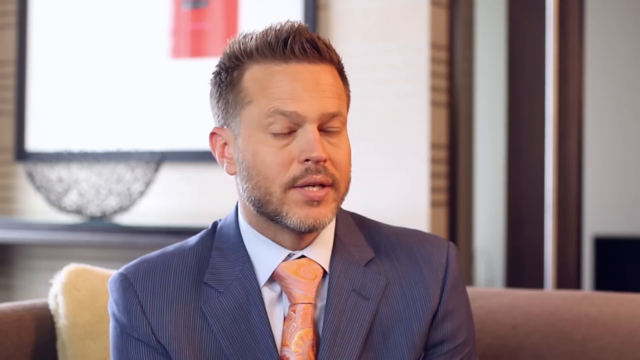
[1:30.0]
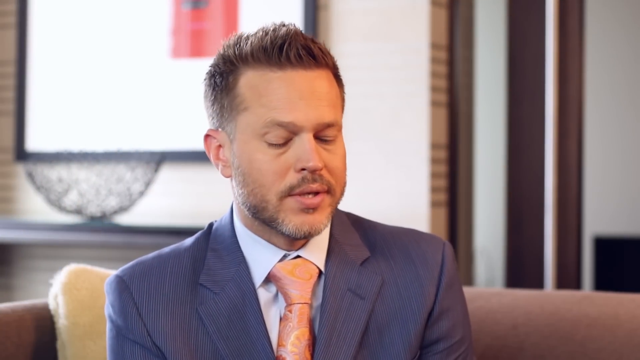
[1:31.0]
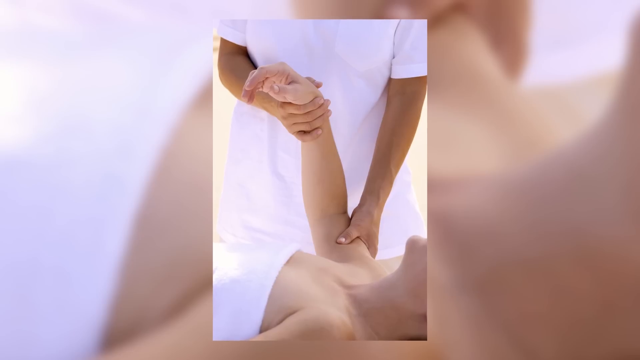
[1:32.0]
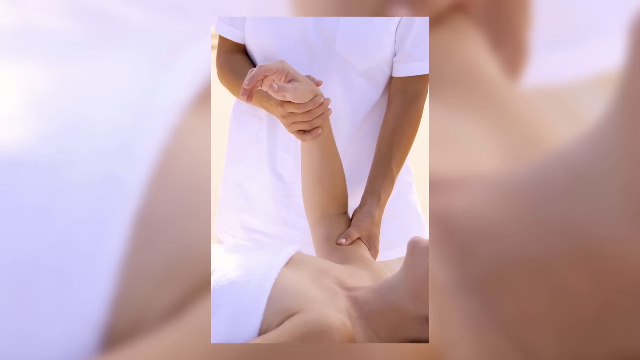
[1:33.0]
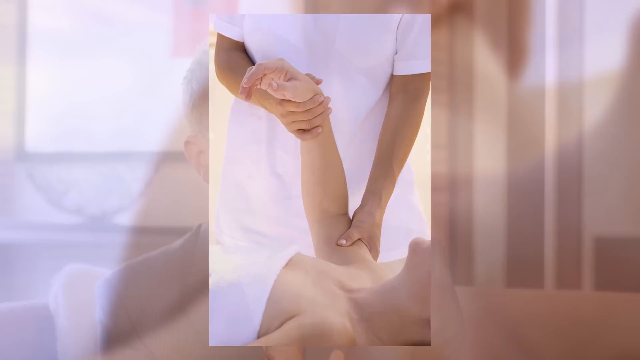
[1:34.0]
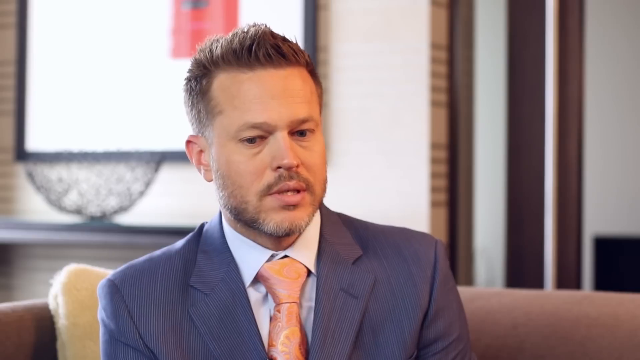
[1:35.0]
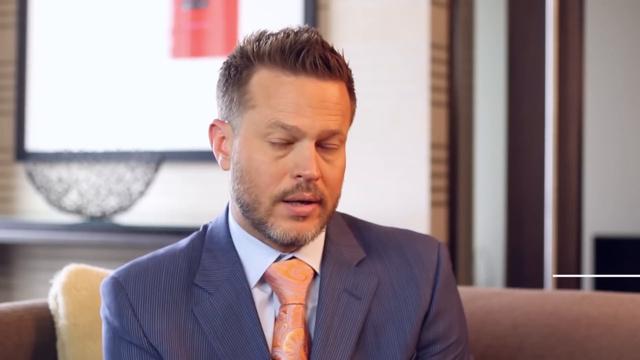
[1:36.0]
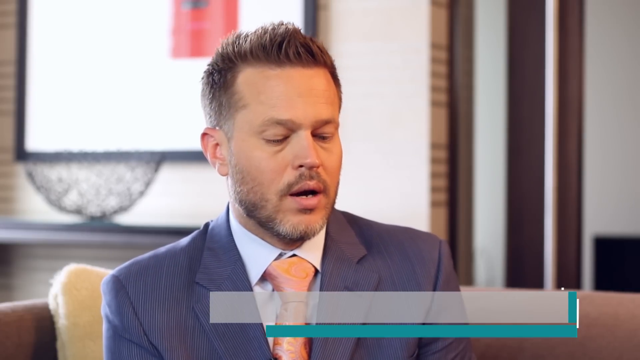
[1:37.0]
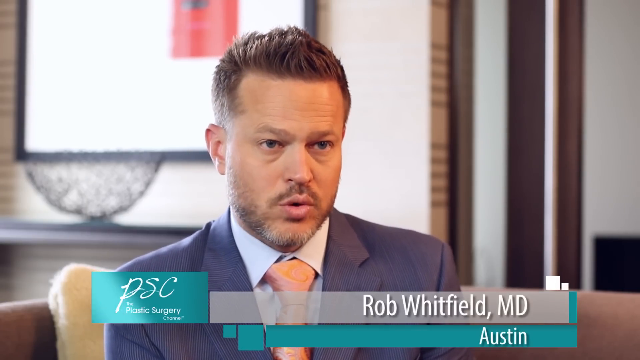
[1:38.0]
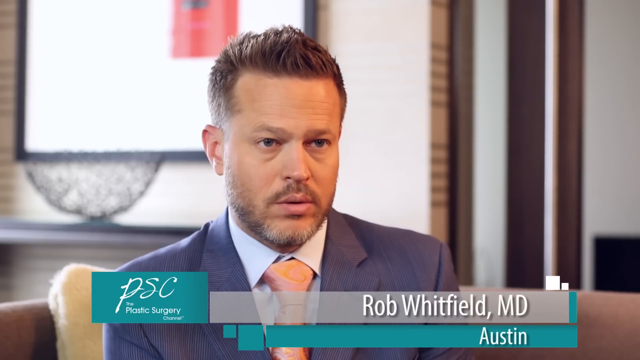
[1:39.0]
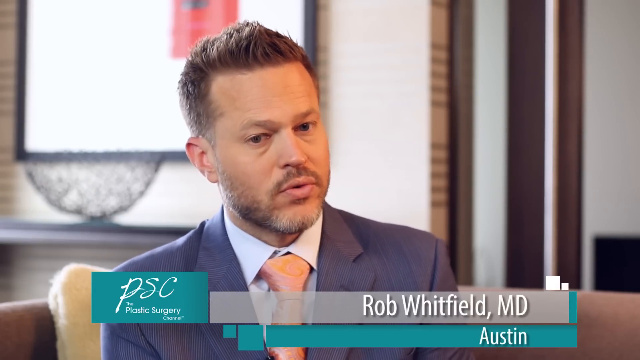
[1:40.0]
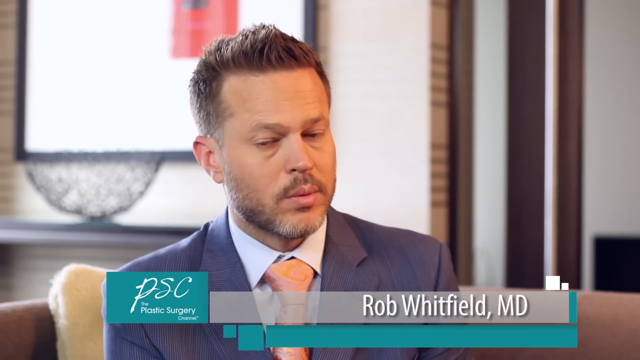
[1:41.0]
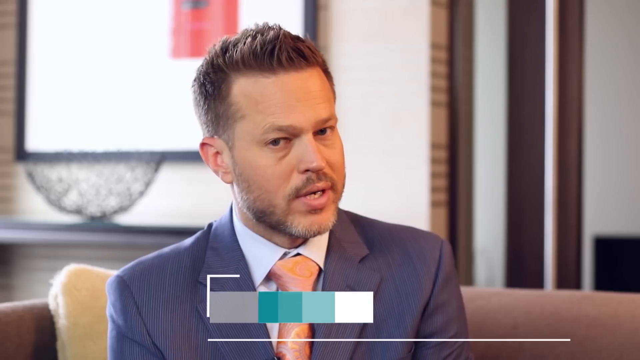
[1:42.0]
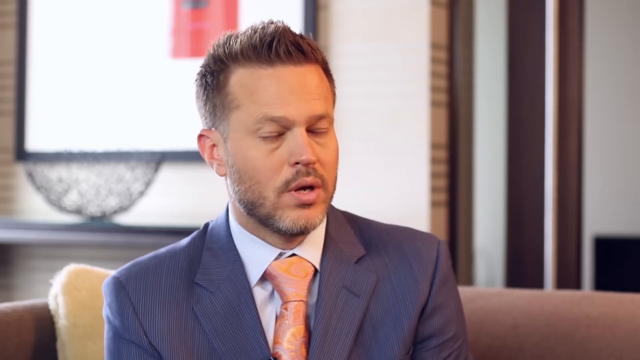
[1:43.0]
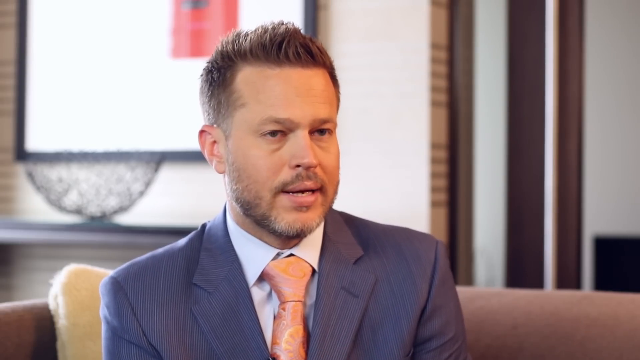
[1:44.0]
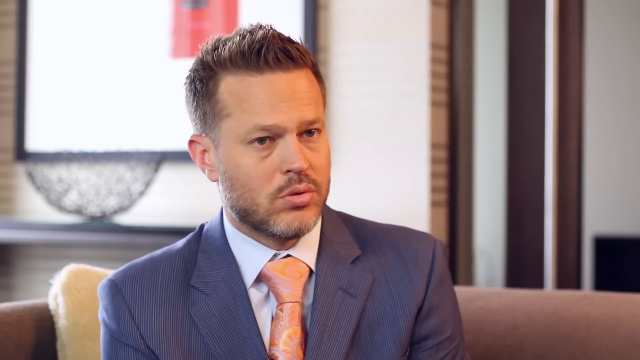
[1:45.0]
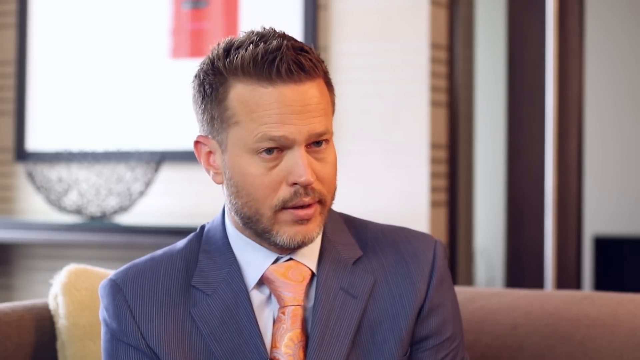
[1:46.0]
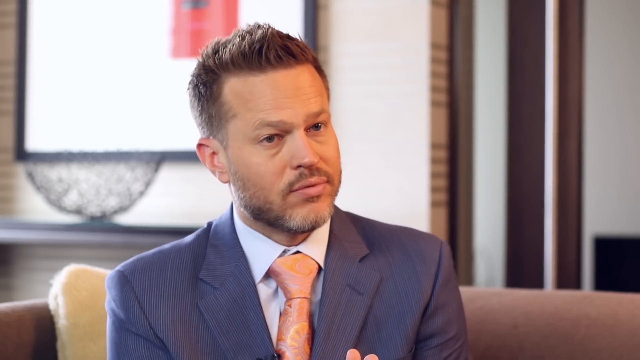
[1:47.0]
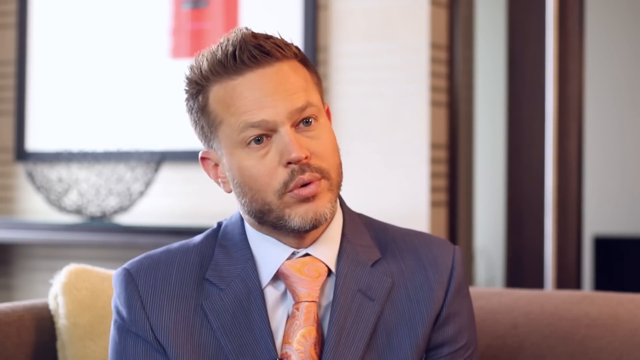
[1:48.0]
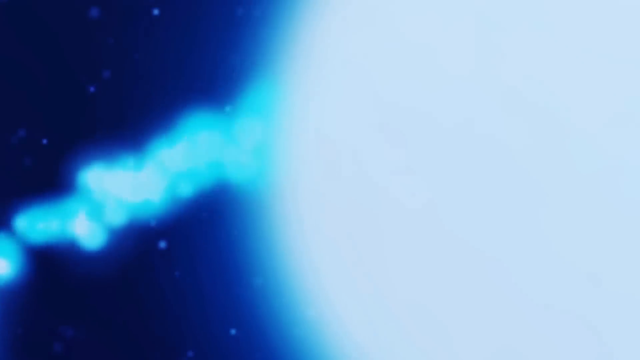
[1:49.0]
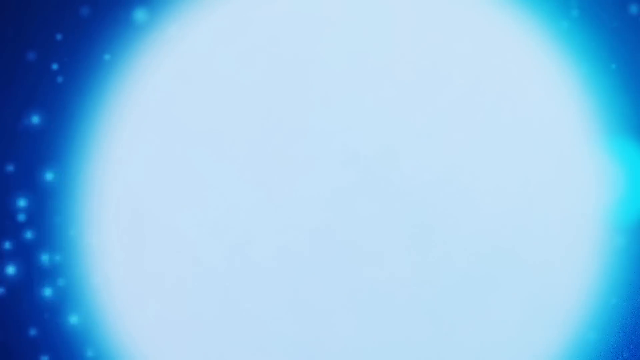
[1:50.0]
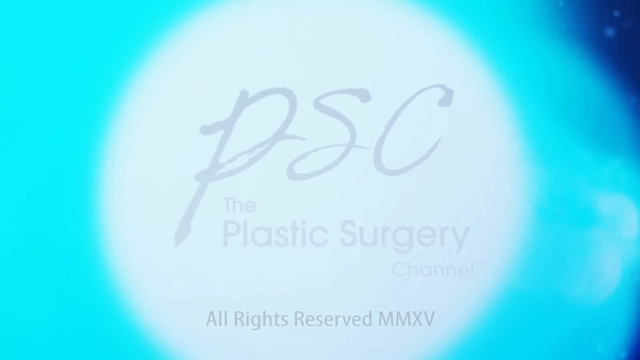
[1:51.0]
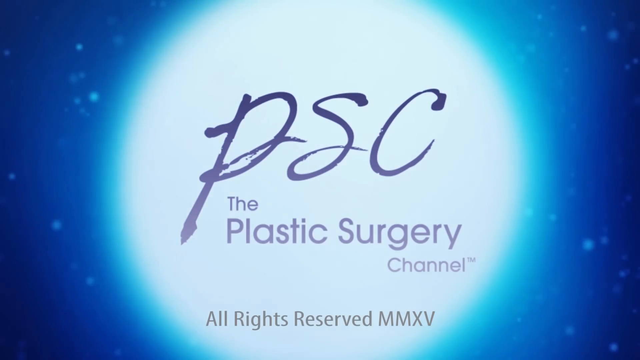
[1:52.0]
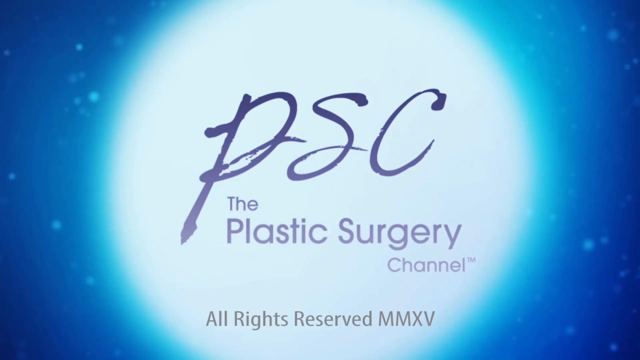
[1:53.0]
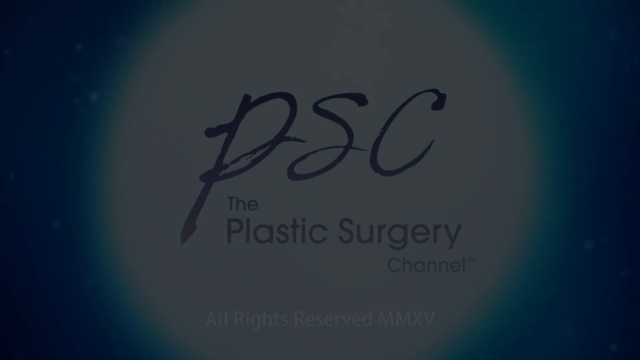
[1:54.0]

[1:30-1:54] A Caucasian male doctor speaks, facing forward but looking slightly off to the right of the camera. The video then changes to an image of two Caucasian women. One appears to be a nurse; she is visible from the lower shoulders down to the upper hips and wears a white nurse's uniform with short sleeves, her arms visible. She holds on to a patient lying beneath her, head to the right and torso pointing toward the left. The patient's right arm is raised, and the nurse holds it by the wrist with her right arm and by the upper bicep with her left arm. The patient is topless but has a sheet pulled up over her chest, and she is visible from the bottom of her chin to the top of her lower ribcage. The video then changes back to the doctor, and text pops up across the bottom of the screen reading "PSC plastic surgery" followed by "Rob Whitfield MD," with "Austin" beneath.